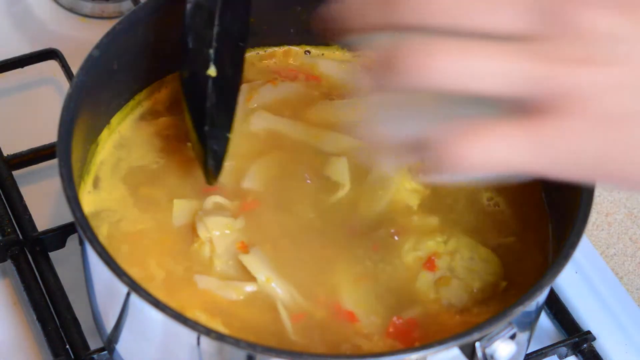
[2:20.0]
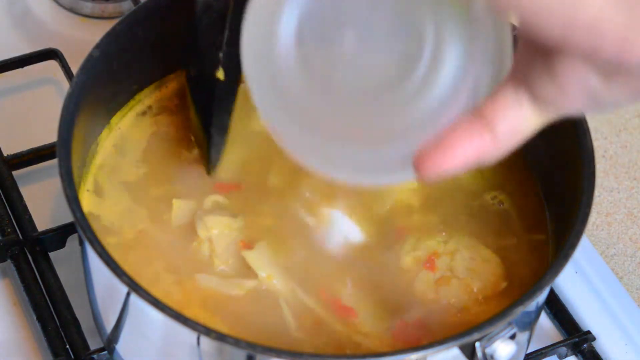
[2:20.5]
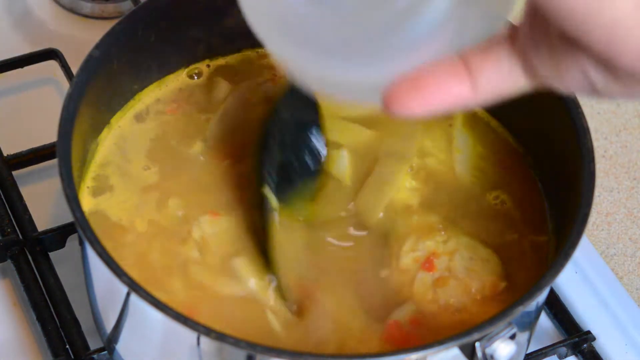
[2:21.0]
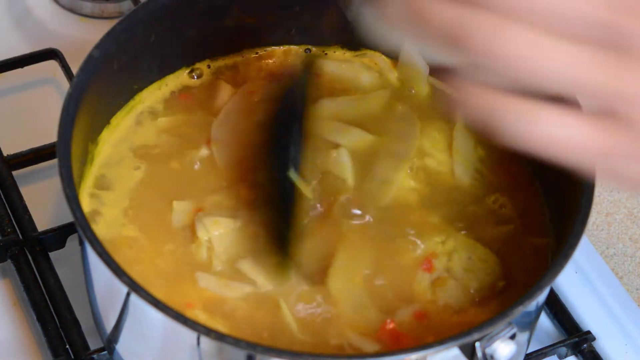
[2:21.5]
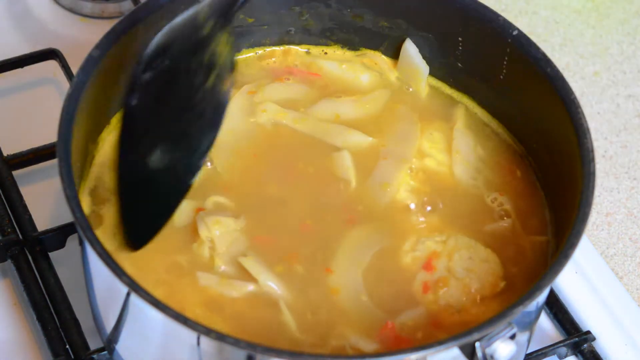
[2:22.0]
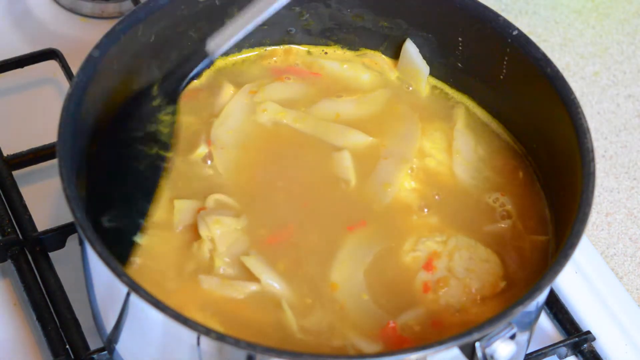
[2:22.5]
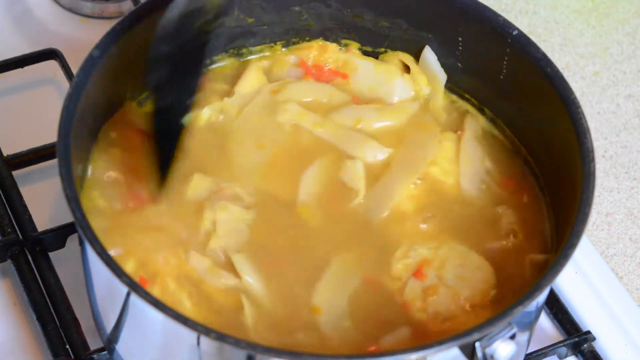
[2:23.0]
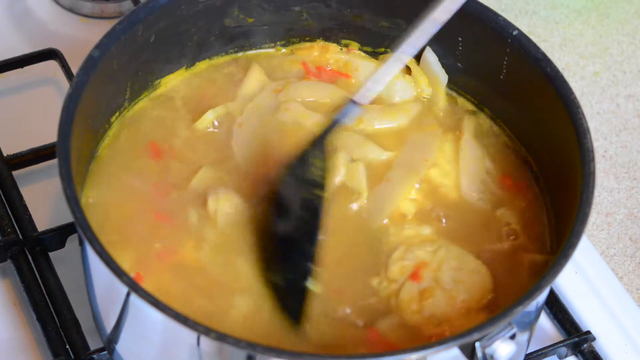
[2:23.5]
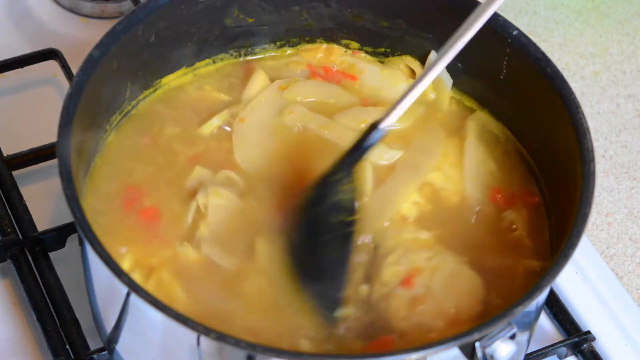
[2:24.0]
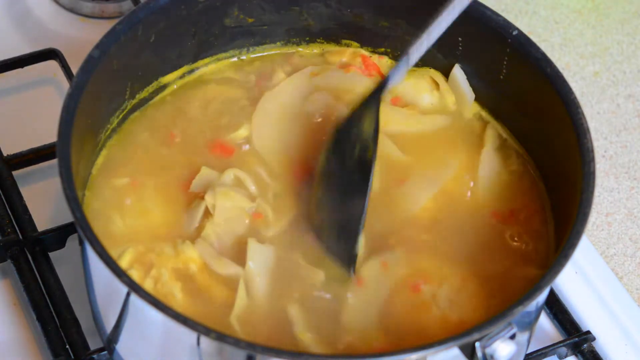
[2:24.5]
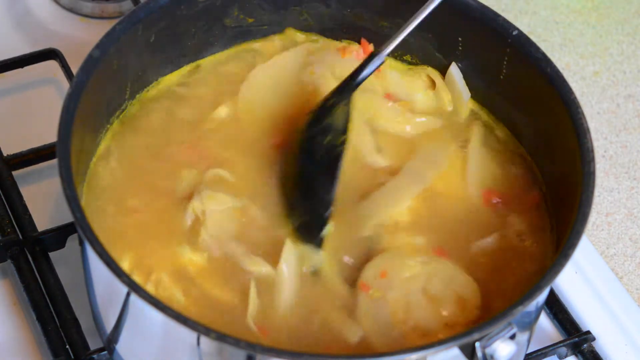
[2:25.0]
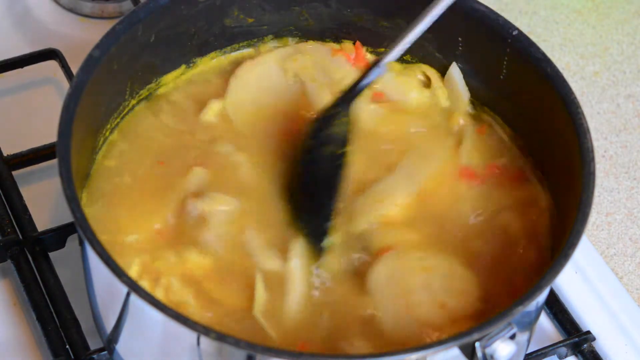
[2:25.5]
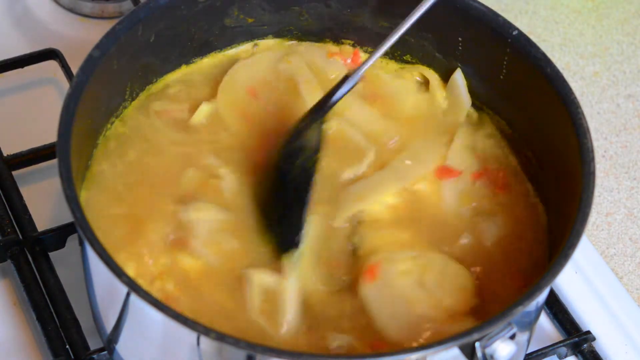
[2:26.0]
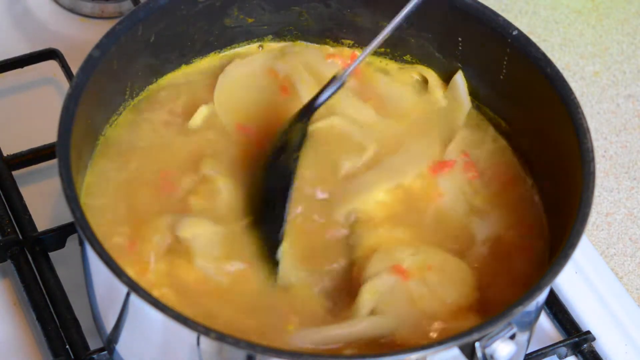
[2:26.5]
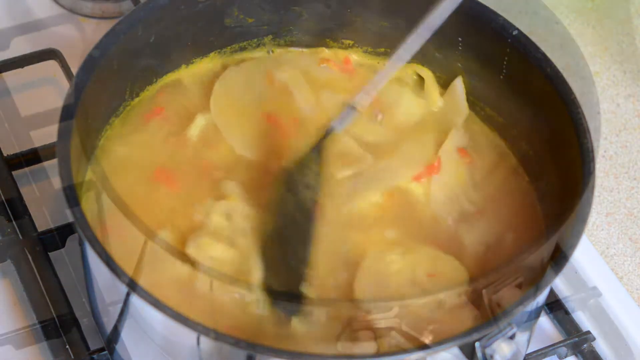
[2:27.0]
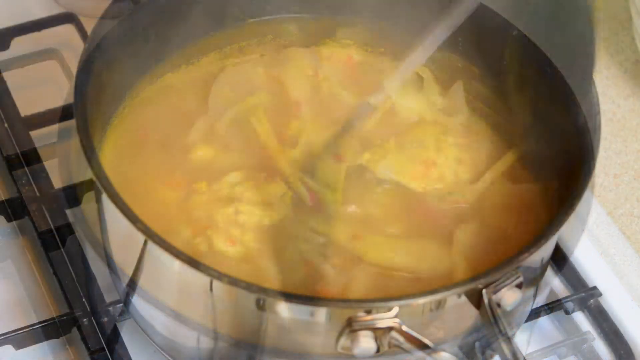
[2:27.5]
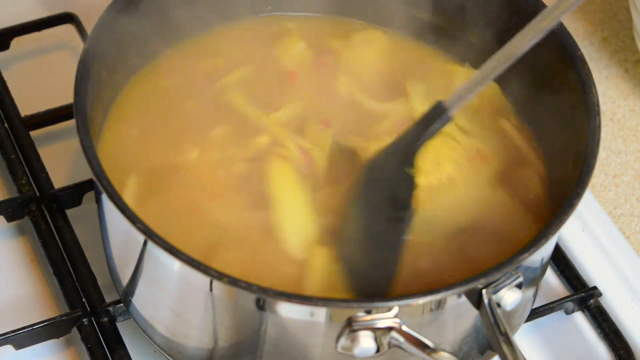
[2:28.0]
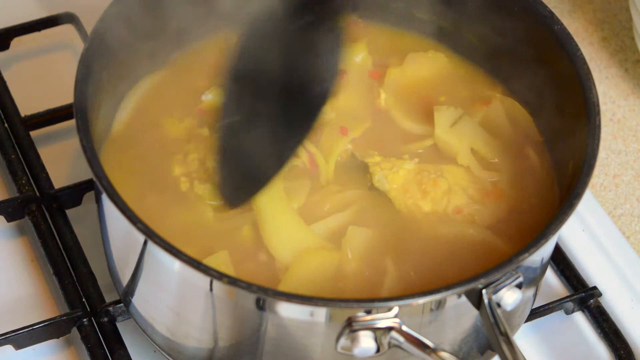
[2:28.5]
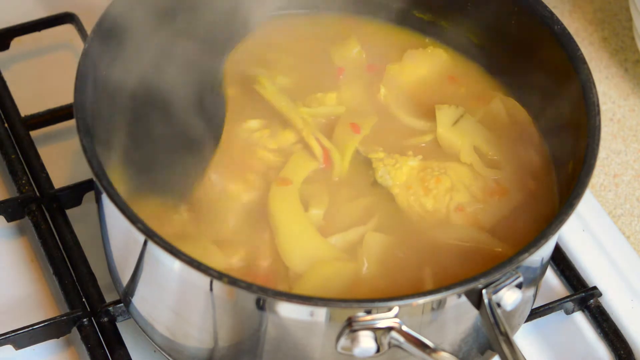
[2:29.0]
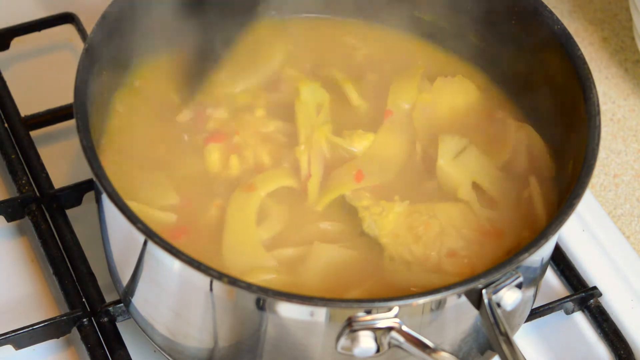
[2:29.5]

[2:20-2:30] A pot on the stove holds a boiling stew with a lot of orange items that look like chili, along with some meat. The stew has become sort of orange. Sauces or spices keep being added. The pot is black inside and silver outside, and the spoon is black and silver. Sauce from a small container is put into the soup.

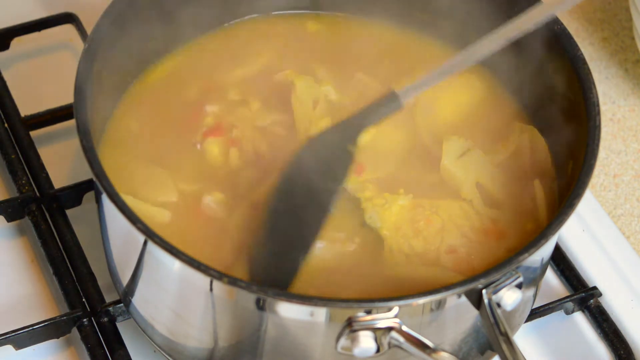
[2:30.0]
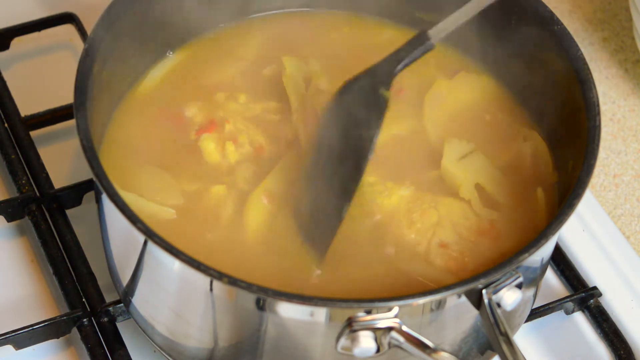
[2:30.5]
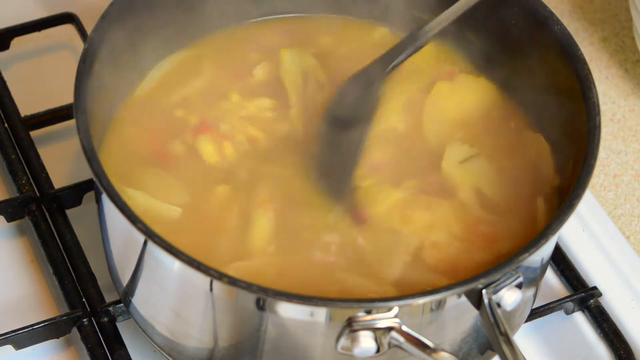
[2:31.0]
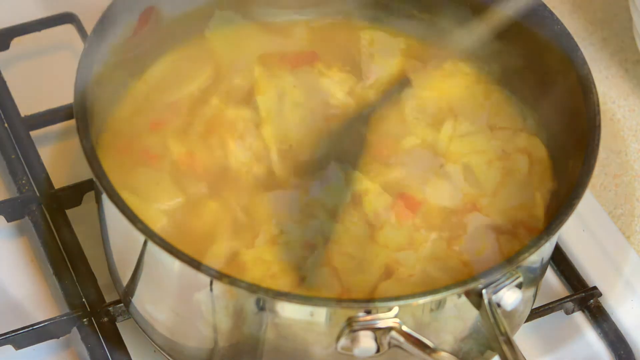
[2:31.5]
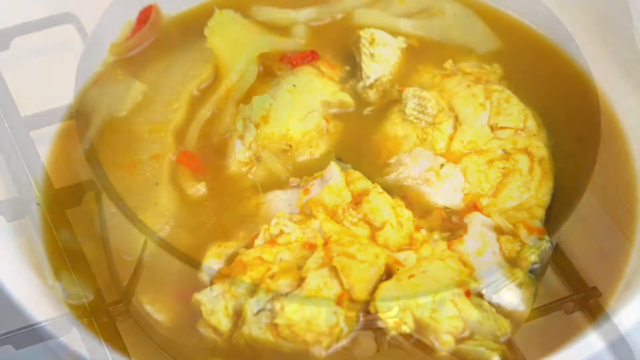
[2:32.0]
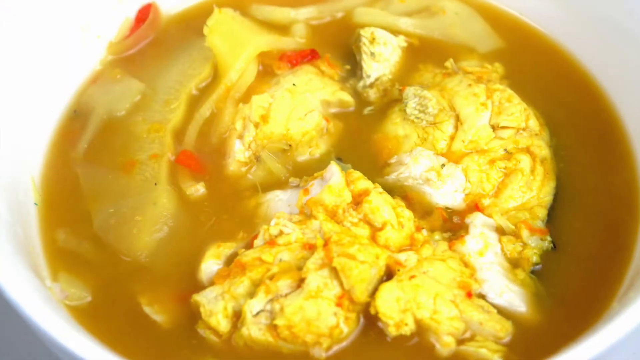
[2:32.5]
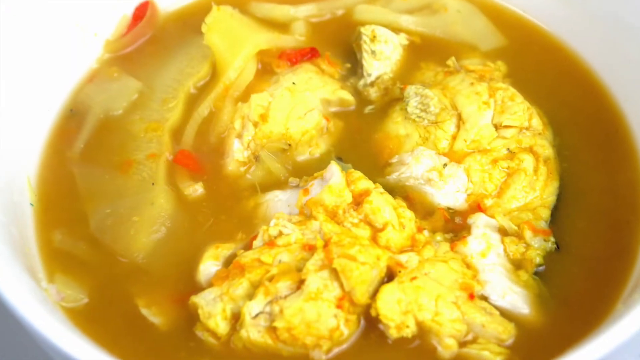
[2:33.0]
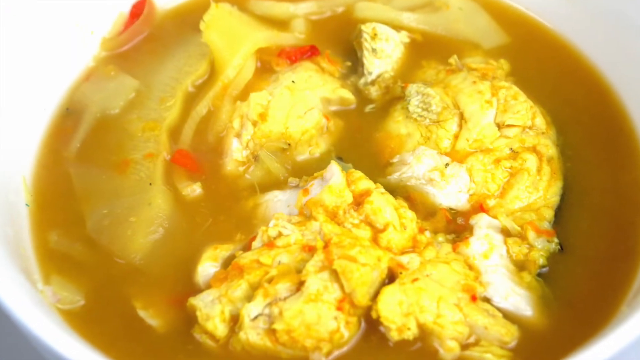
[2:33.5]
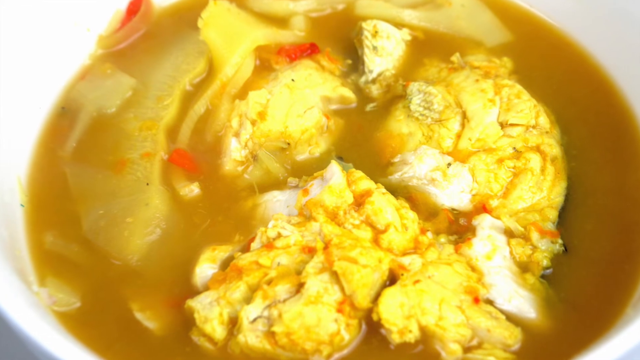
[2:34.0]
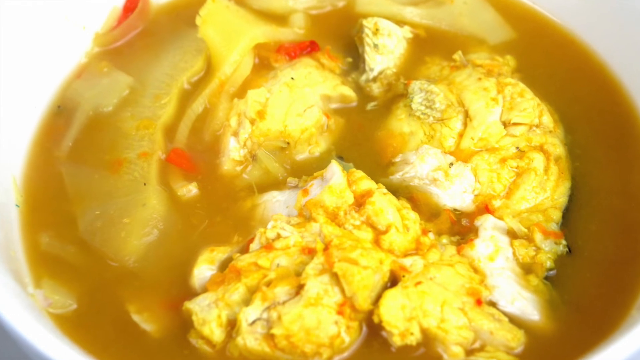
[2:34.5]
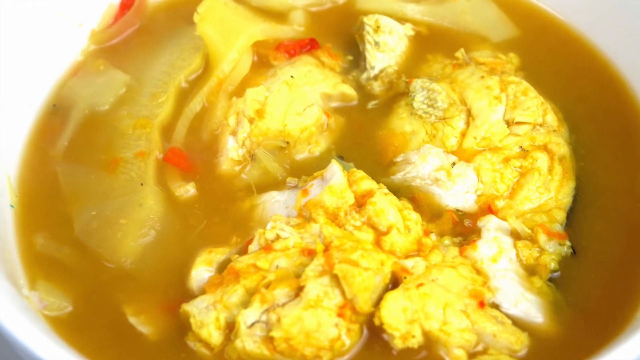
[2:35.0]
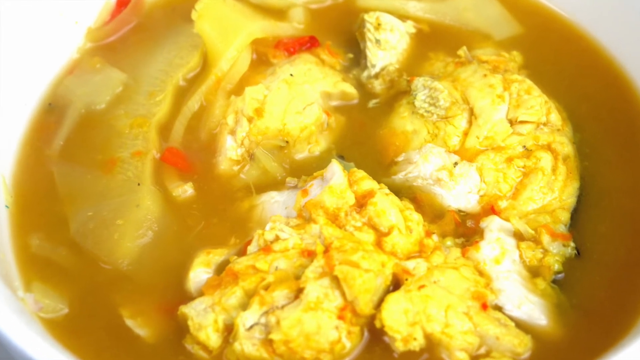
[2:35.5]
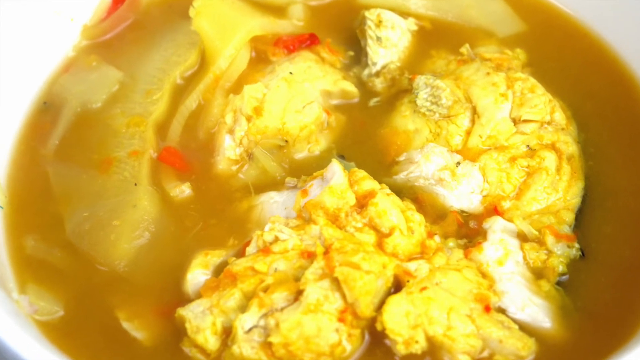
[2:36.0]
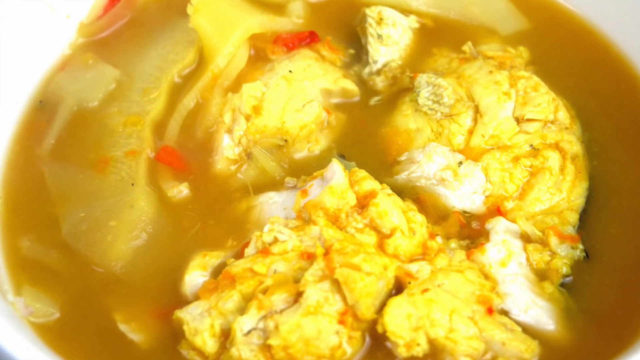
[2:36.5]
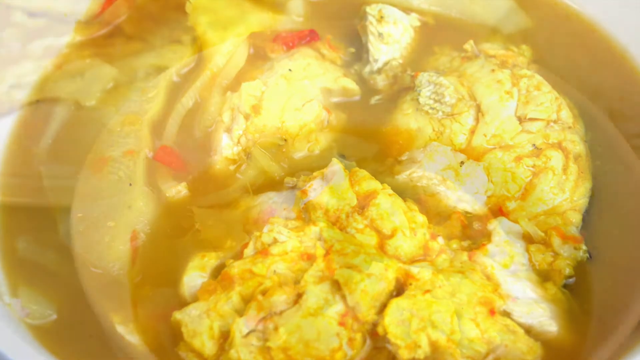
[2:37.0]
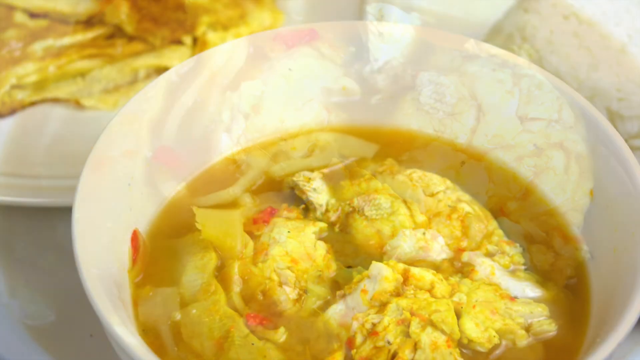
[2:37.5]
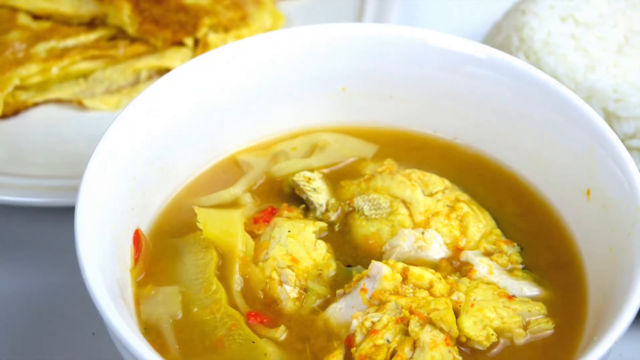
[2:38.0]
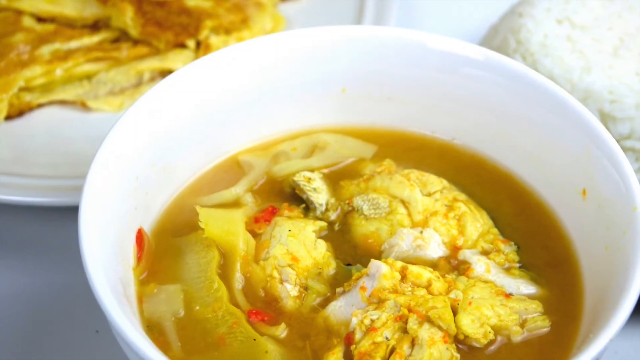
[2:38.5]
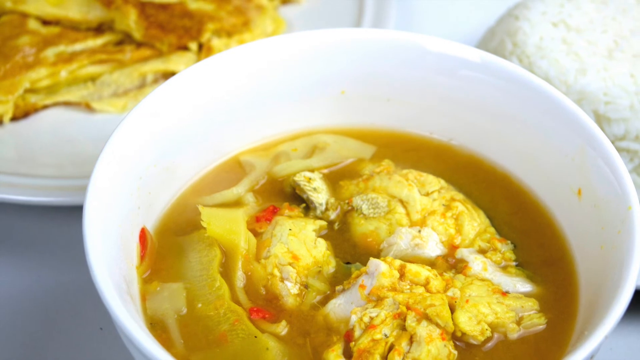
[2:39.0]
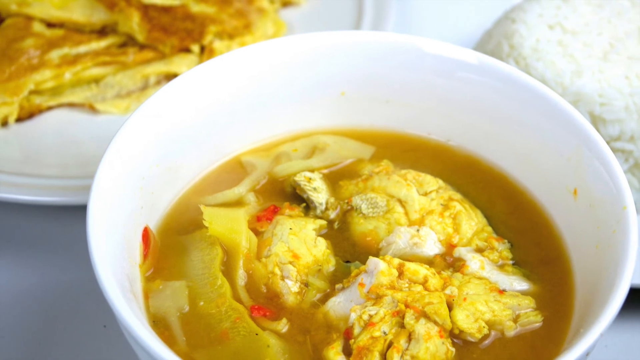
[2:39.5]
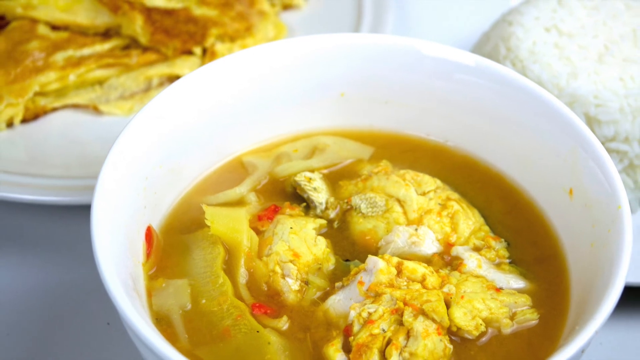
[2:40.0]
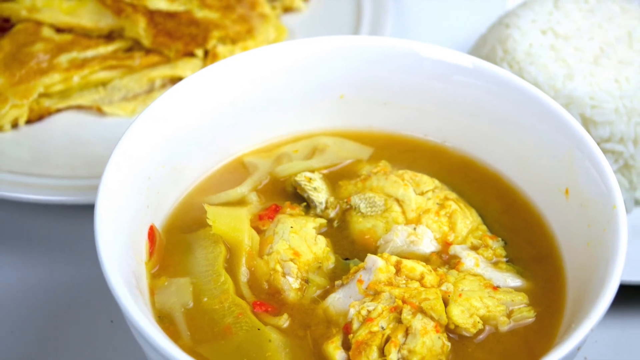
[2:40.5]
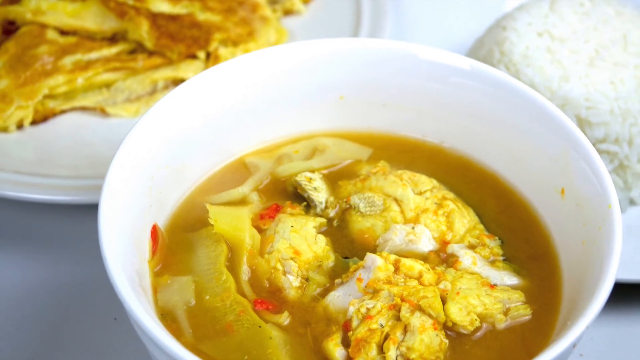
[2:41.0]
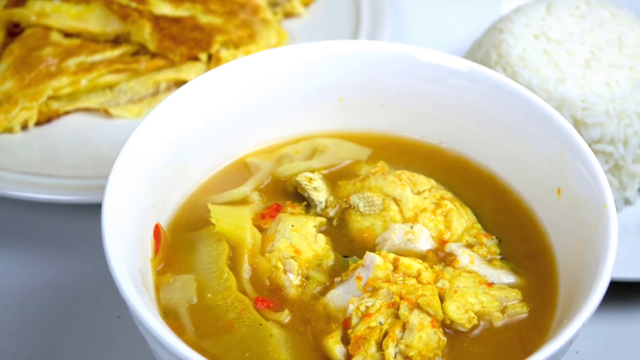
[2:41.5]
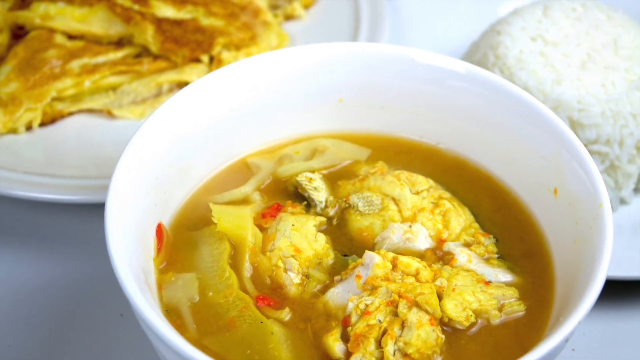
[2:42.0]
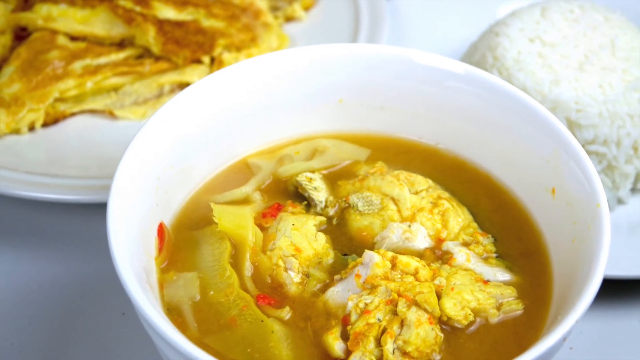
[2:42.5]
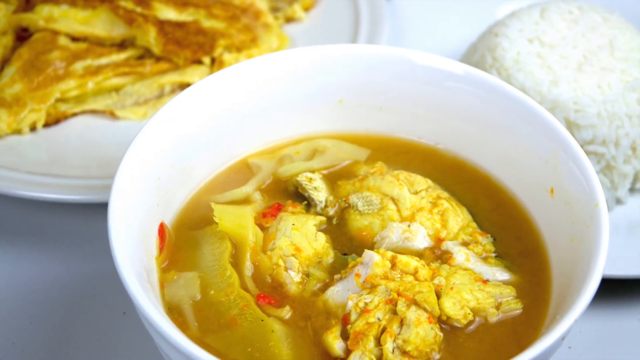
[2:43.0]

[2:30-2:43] A big cooking spoon in two colors, black and silver, is shown with a pot full of stew that looks like a meat stew, with some ingredients inside. The pot is silver outside and black inside, and it is on the stove, boiling. The stew is then served into a small white bowl, and the camera views it closer: meat is visible, along with some onions and chilies, including a red chili. The camera keeps viewing it closer. The finished meal shows rice next to the sauce and something golden brown that looks like a cake, with meat inside the sauce.